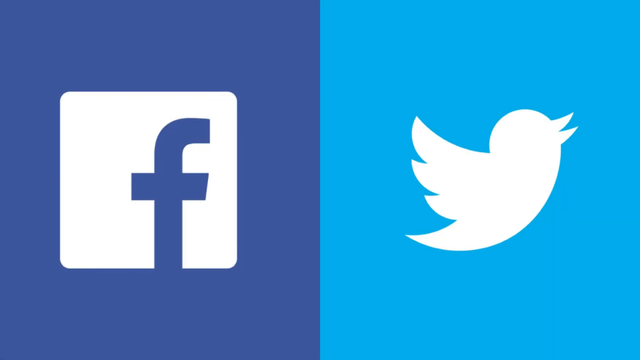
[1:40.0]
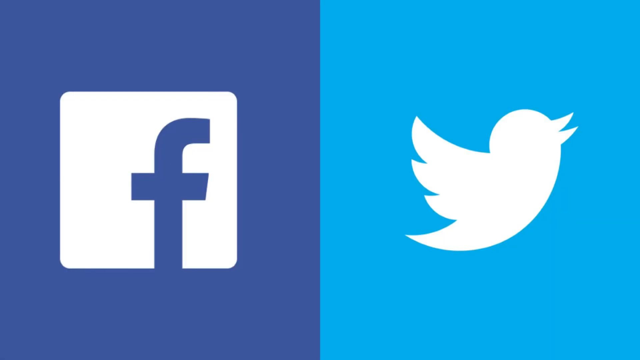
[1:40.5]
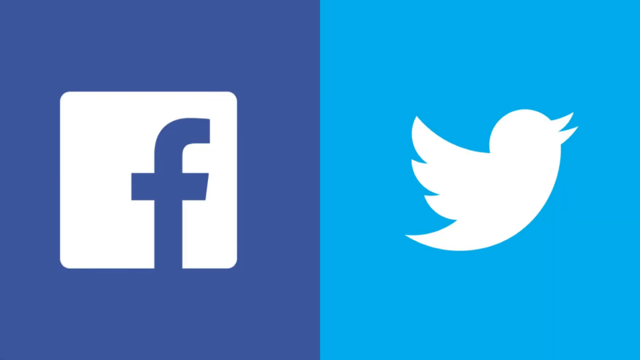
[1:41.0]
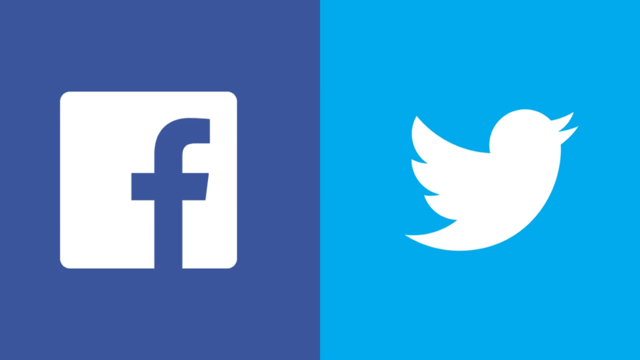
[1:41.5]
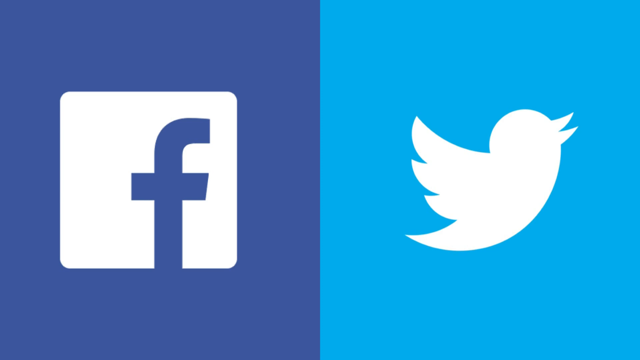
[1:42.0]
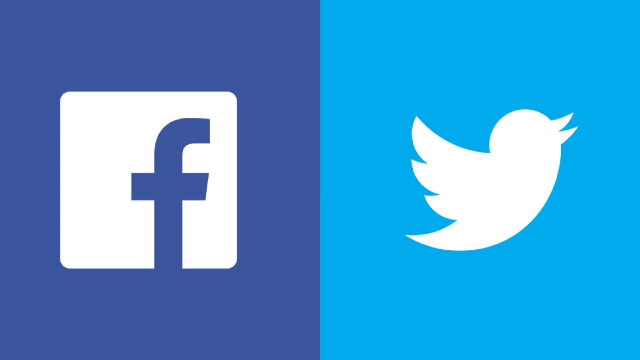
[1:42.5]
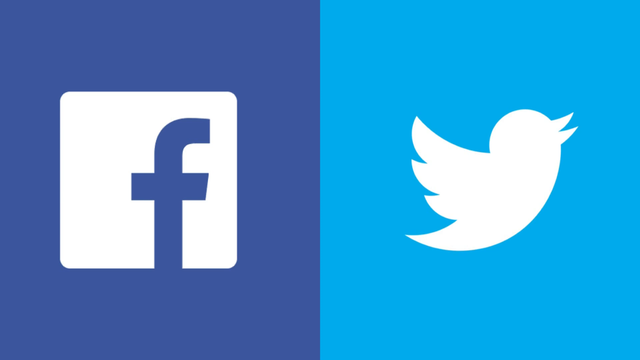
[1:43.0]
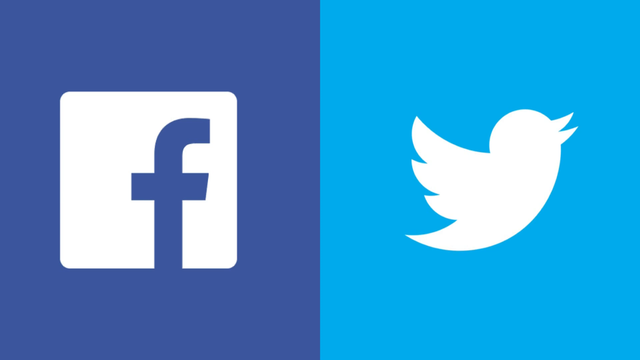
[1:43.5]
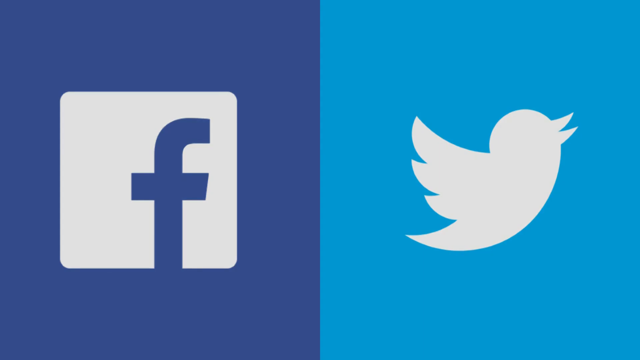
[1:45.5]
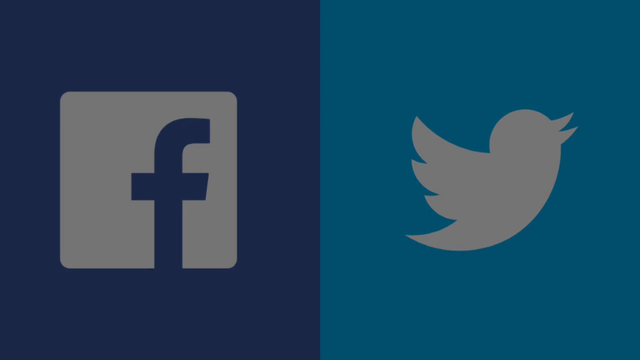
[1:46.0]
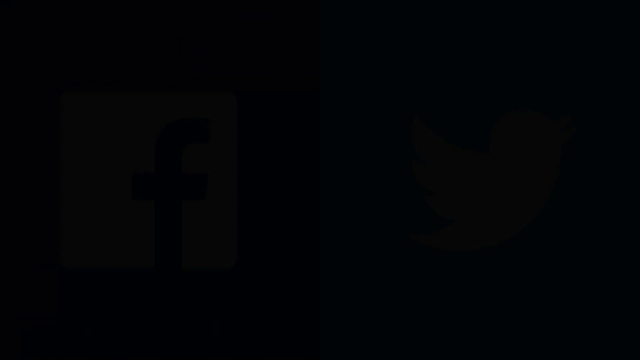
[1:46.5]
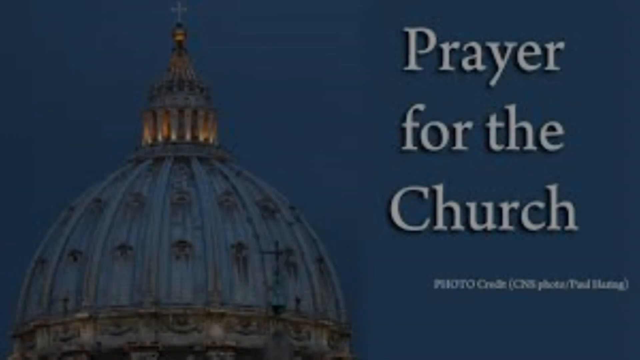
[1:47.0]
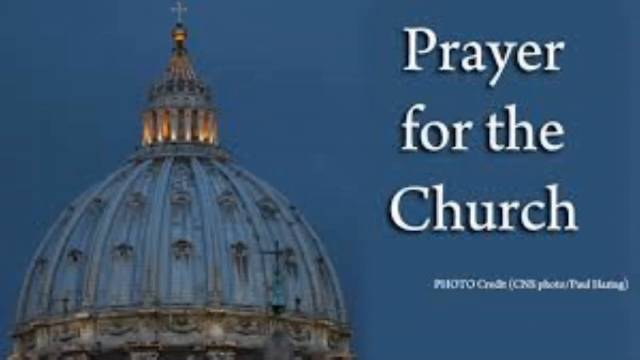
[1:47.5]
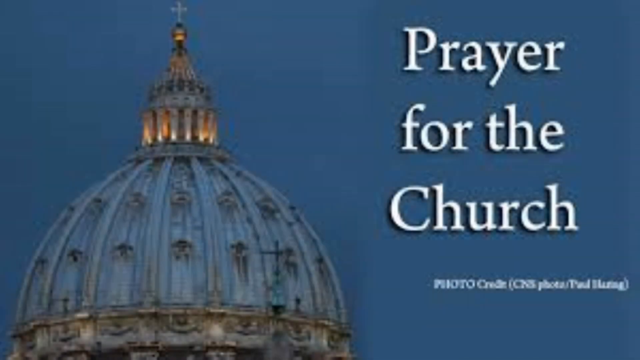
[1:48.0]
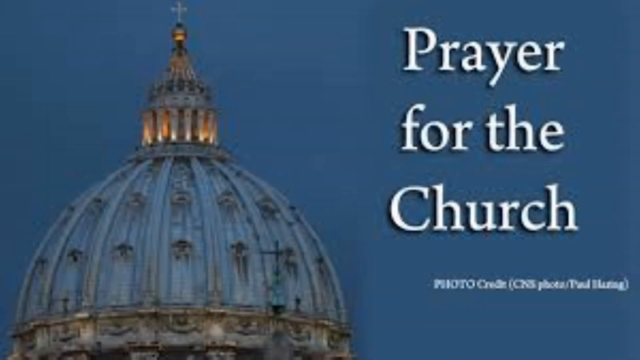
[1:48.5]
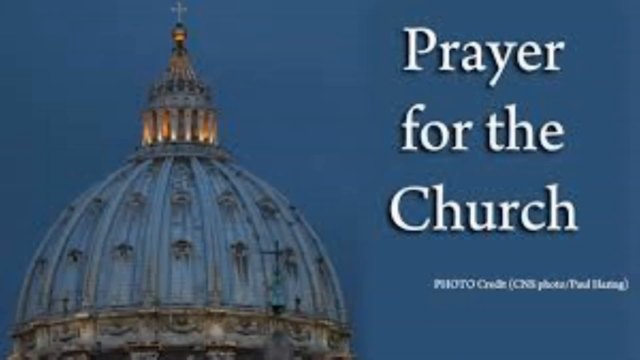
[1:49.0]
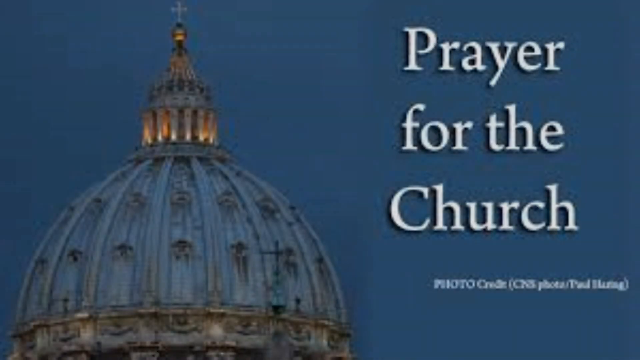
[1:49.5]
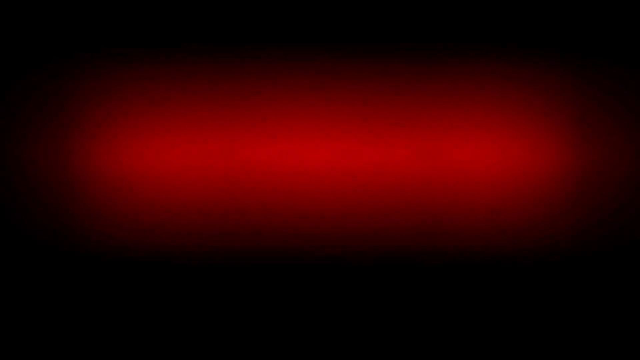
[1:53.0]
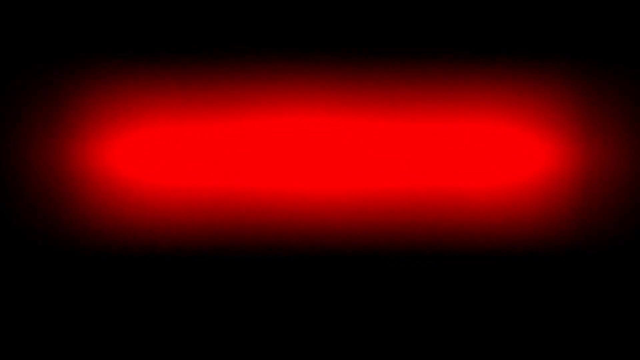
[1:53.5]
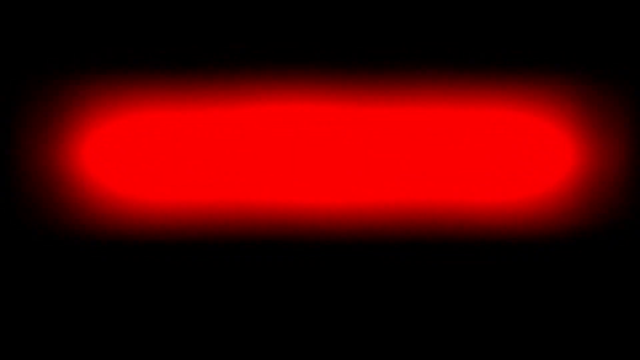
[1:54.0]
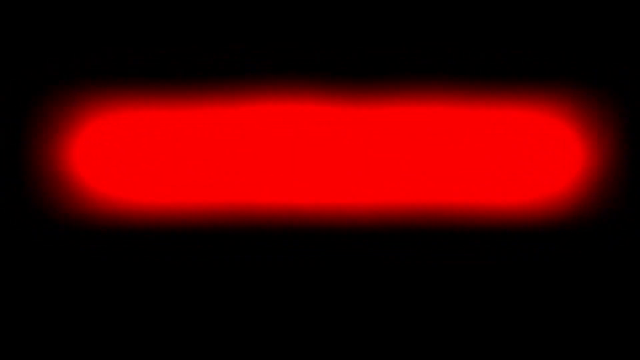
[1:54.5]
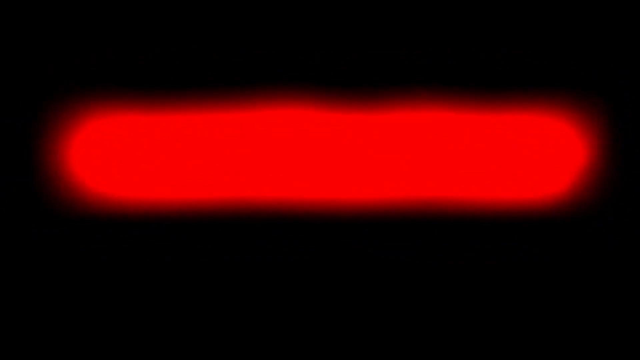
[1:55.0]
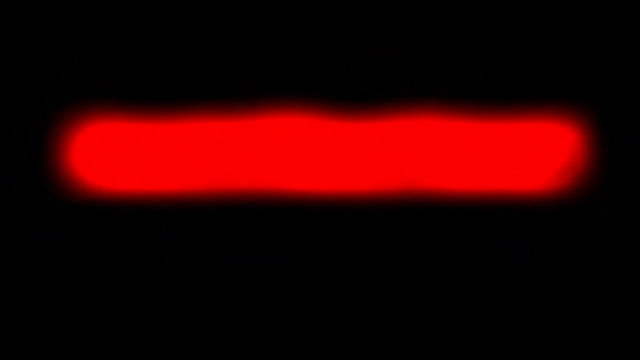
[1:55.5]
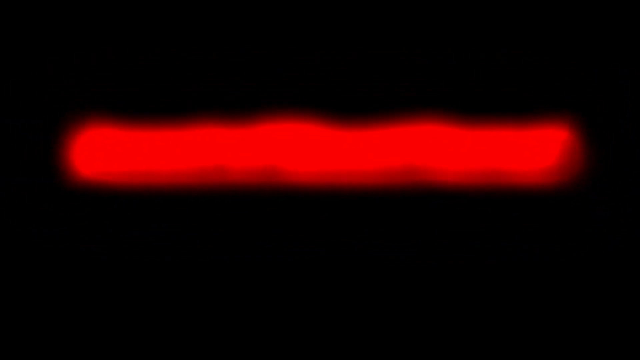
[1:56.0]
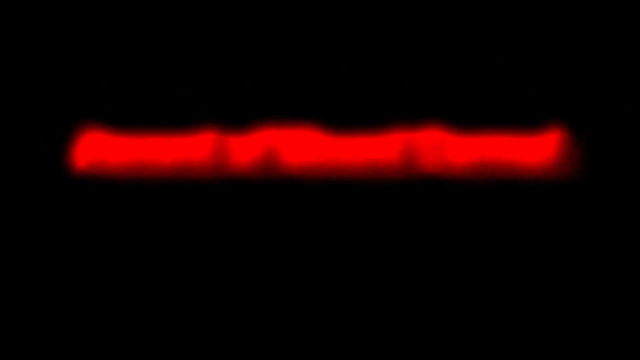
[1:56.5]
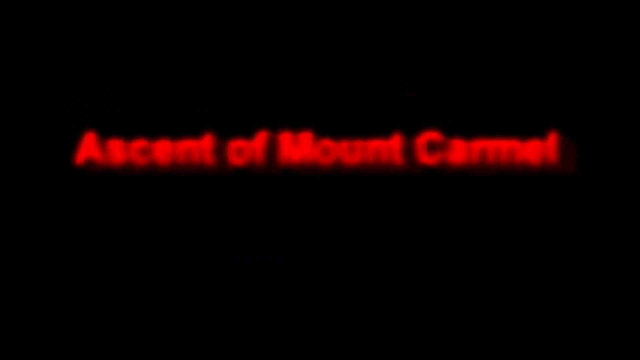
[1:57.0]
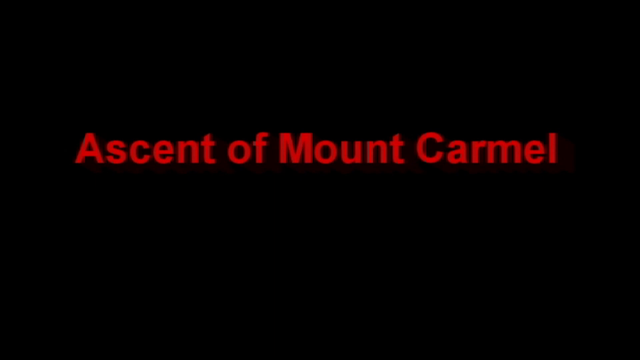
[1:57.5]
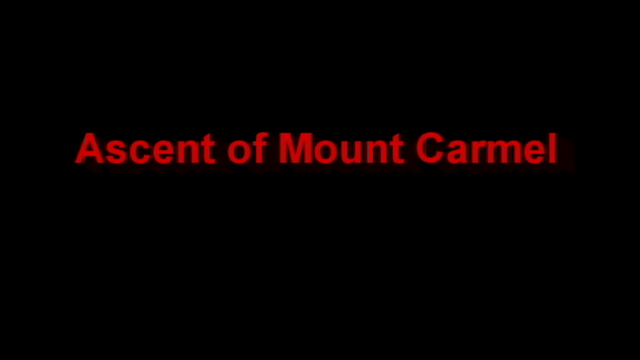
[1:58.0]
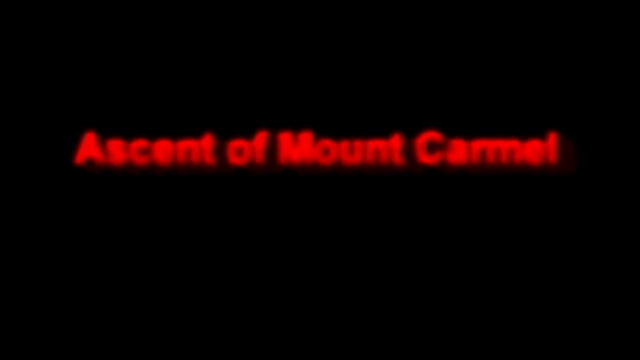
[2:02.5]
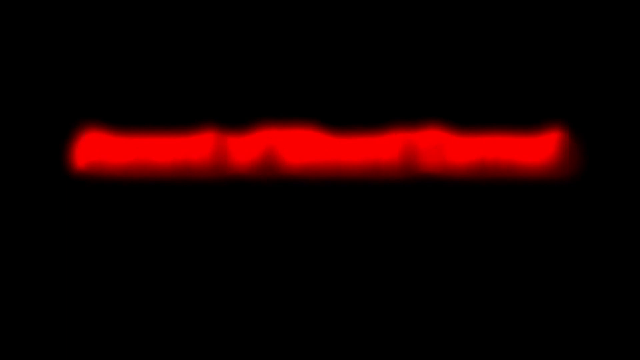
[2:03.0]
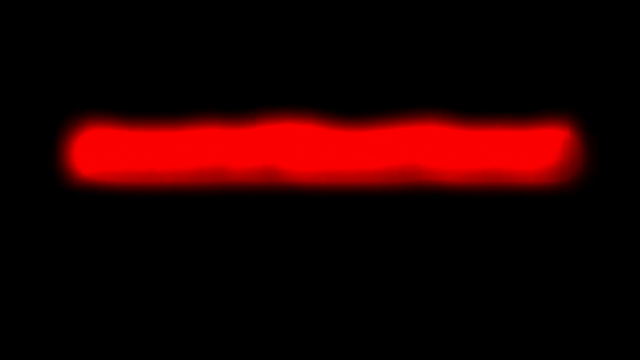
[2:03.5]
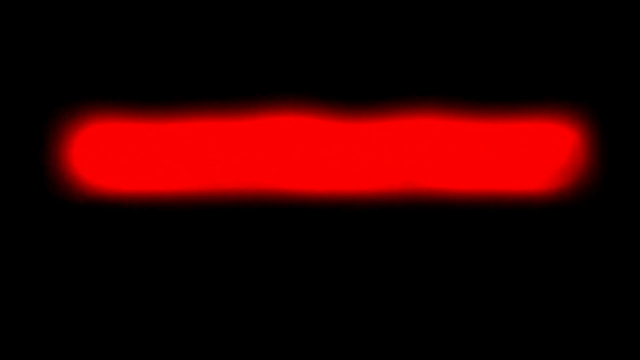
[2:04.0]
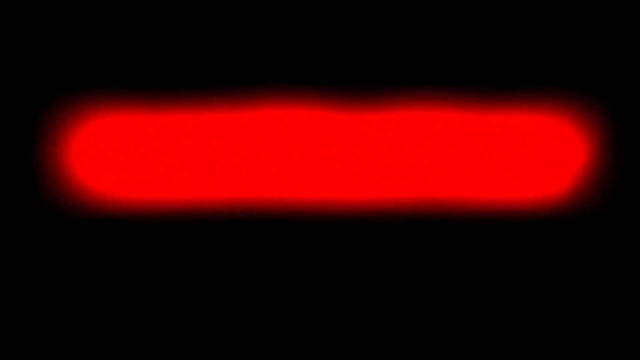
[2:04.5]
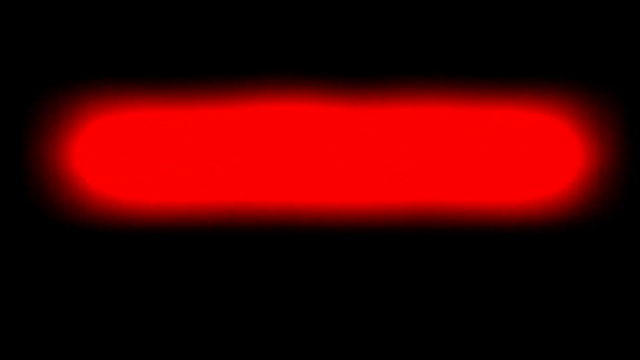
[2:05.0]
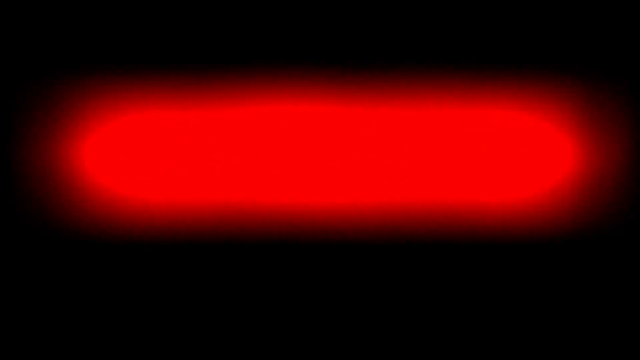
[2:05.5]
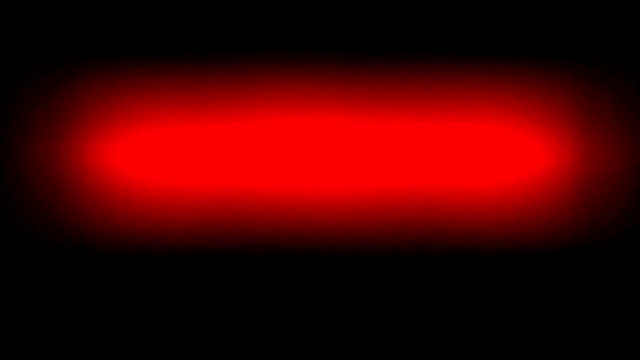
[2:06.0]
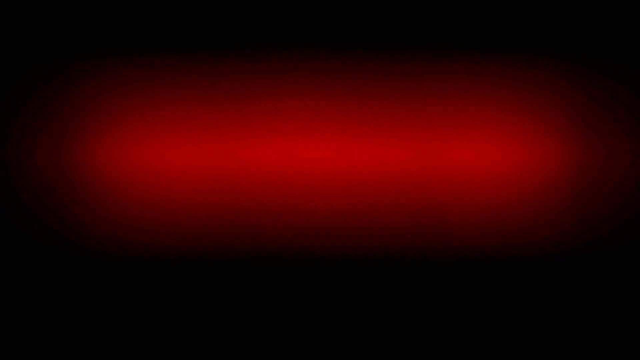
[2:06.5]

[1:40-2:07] Facebook and Twitter logos are shown. Next comes a picture, apparently of the church building, with the caption "prayer for the church"; it shows a dome, apparently of the church, and moves up to show the cross, with lights on sort of the top of the dome. More text then appears in red reading "Ascent of Mount Carmel" on an entirely black background; the text appears to be a brick red and is really light. The video then goes back to the Facebook and Twitter logos and, apparently, the top of the church.